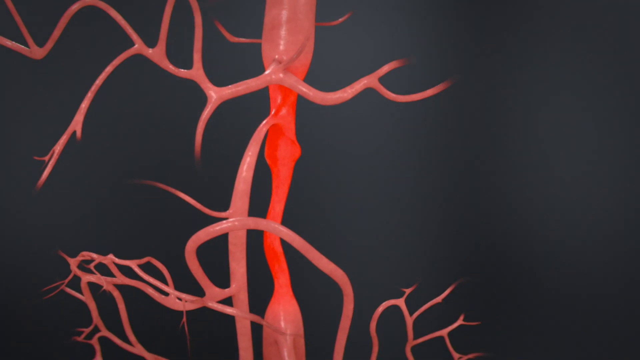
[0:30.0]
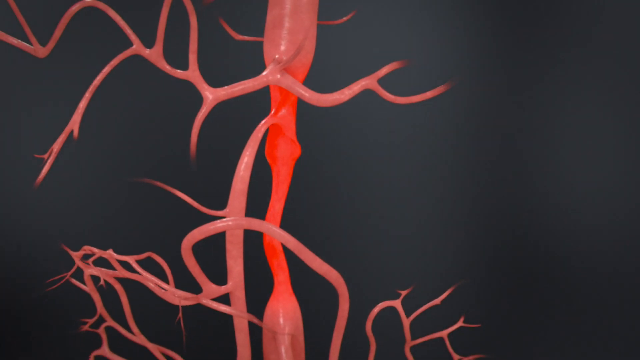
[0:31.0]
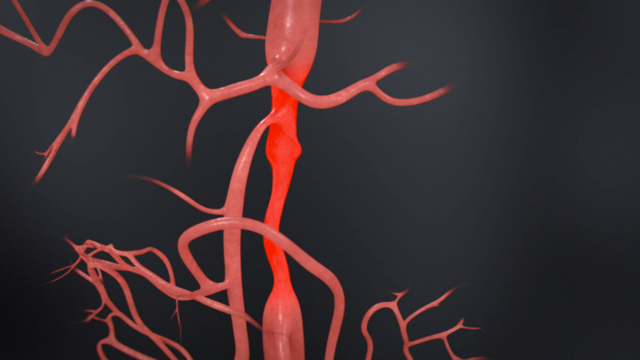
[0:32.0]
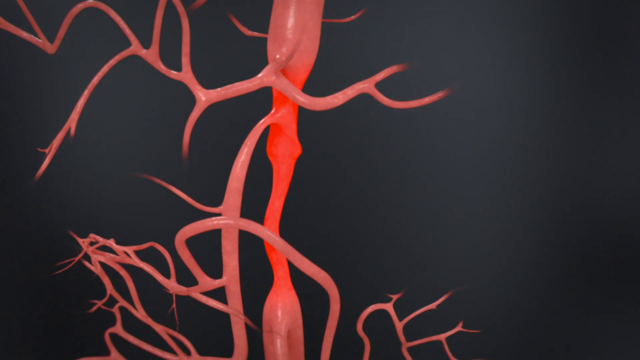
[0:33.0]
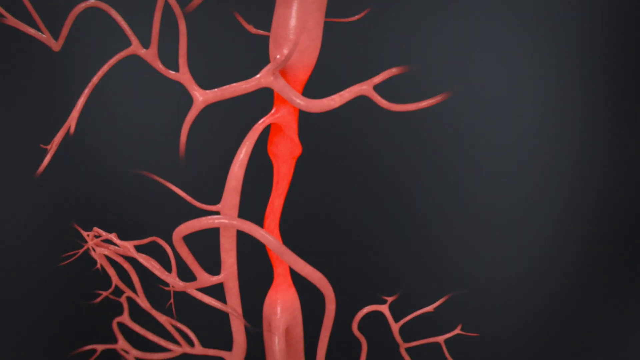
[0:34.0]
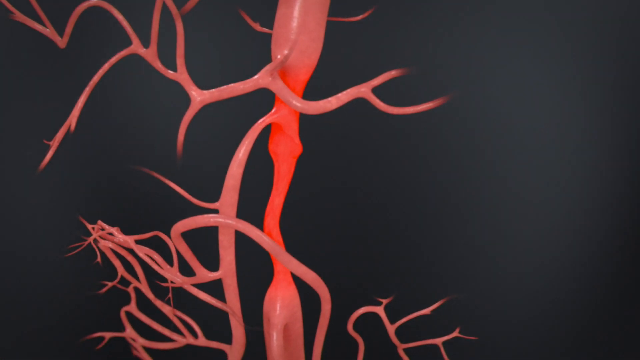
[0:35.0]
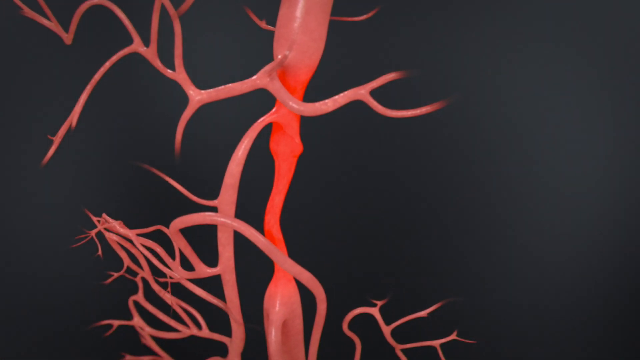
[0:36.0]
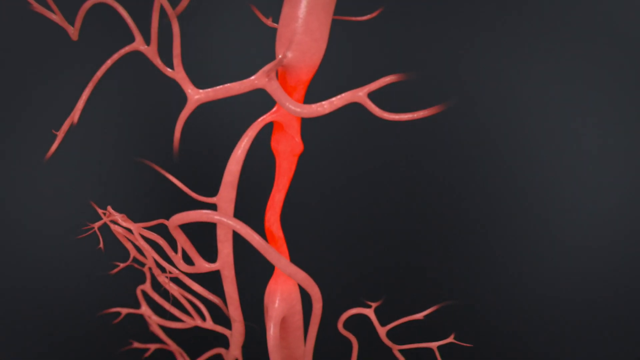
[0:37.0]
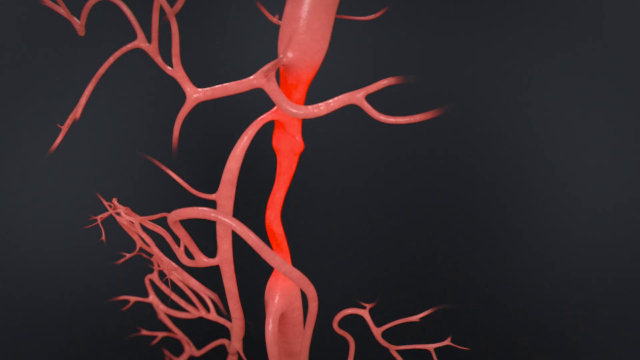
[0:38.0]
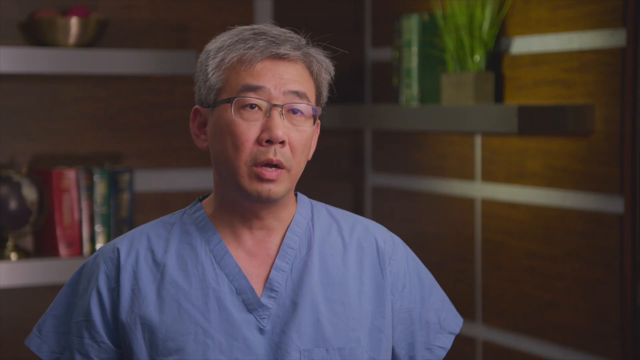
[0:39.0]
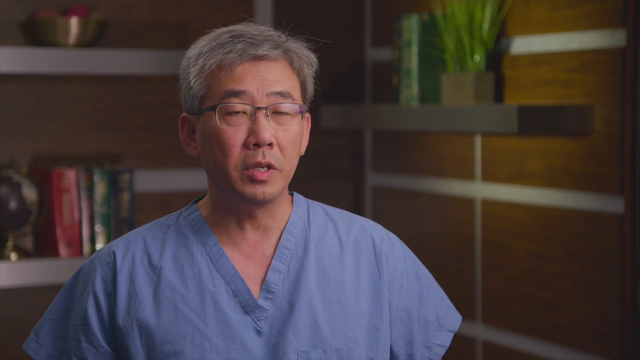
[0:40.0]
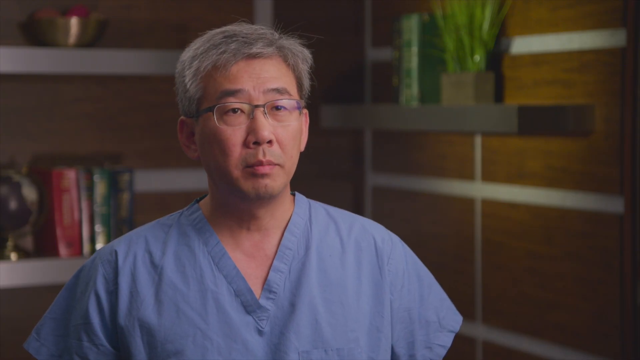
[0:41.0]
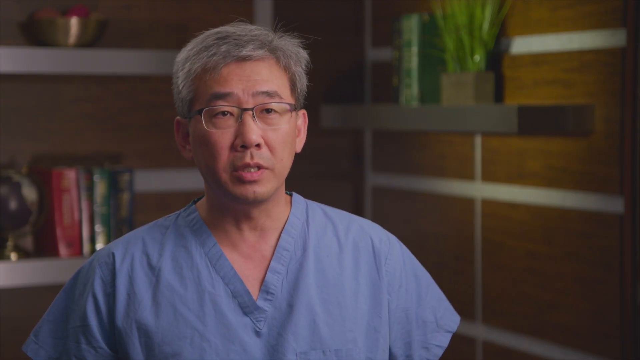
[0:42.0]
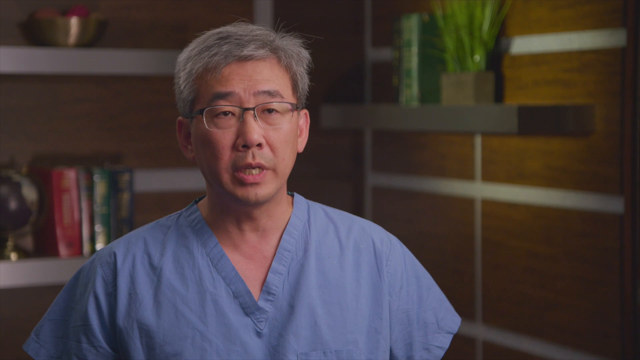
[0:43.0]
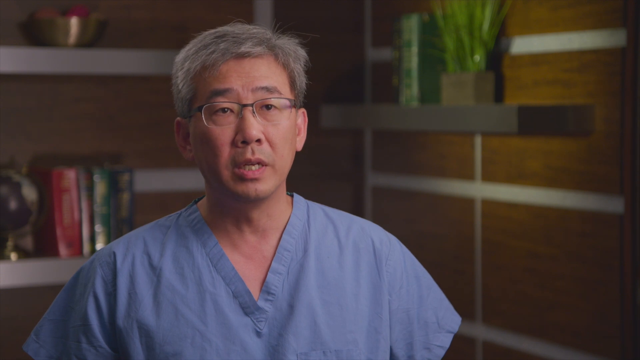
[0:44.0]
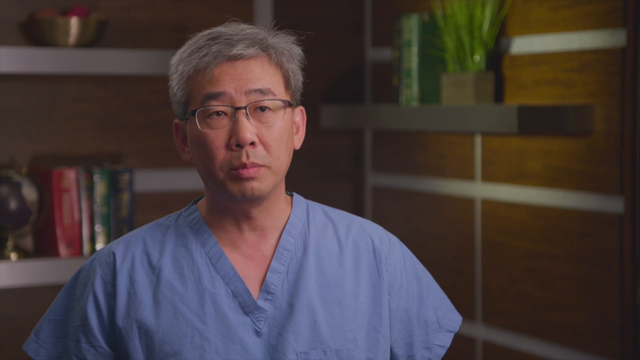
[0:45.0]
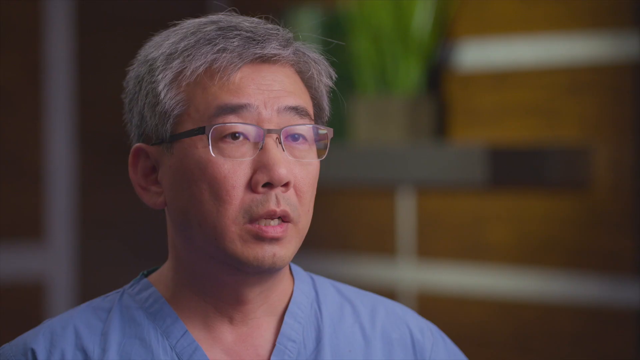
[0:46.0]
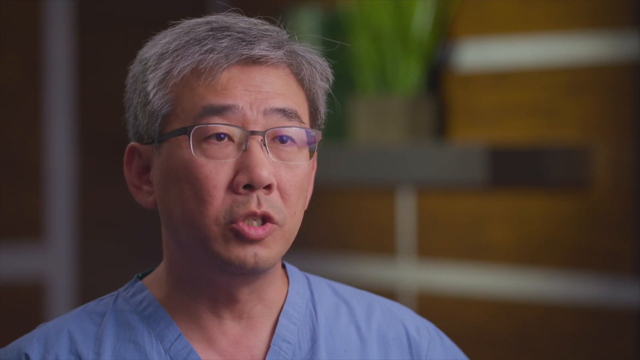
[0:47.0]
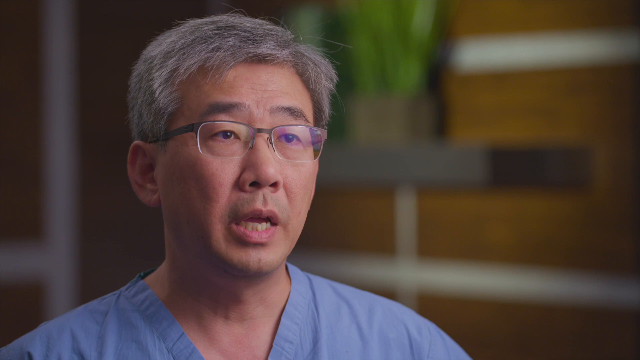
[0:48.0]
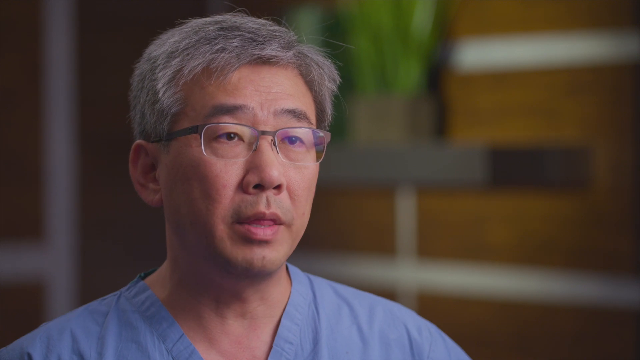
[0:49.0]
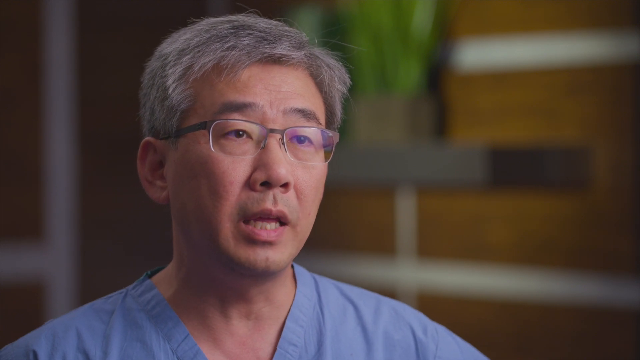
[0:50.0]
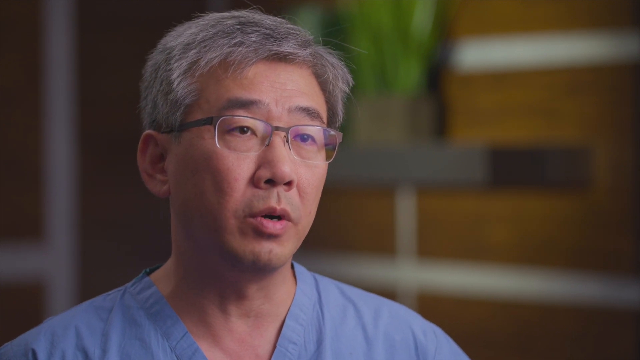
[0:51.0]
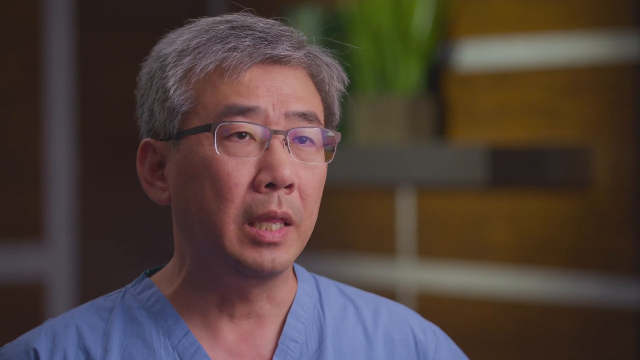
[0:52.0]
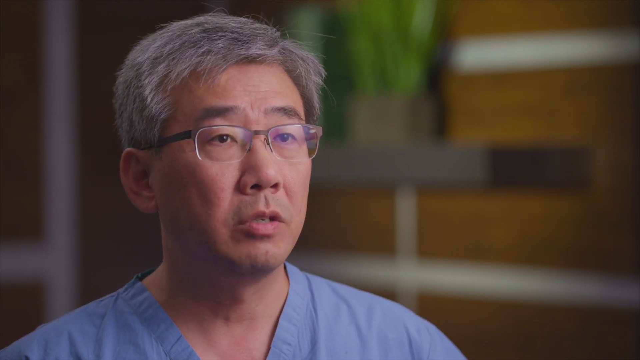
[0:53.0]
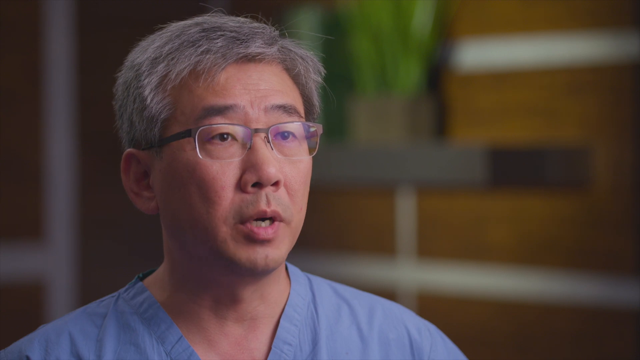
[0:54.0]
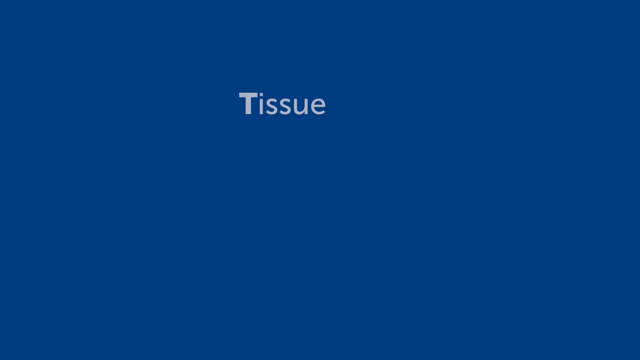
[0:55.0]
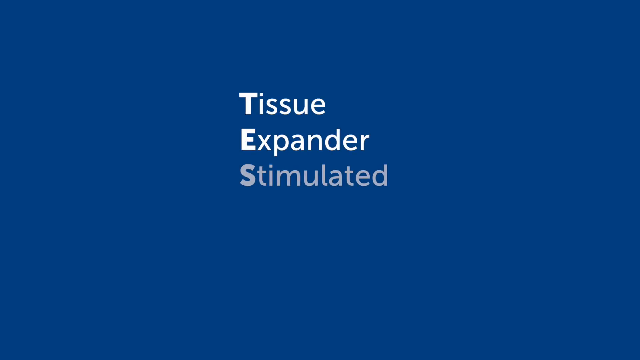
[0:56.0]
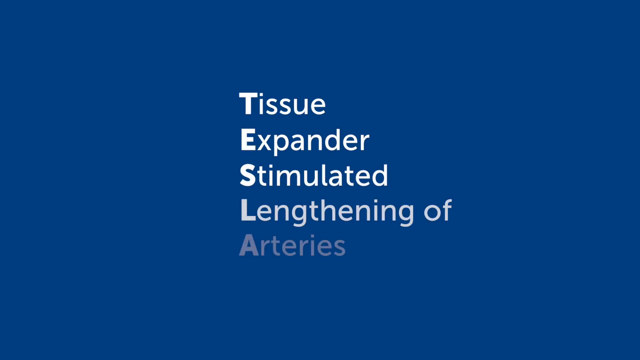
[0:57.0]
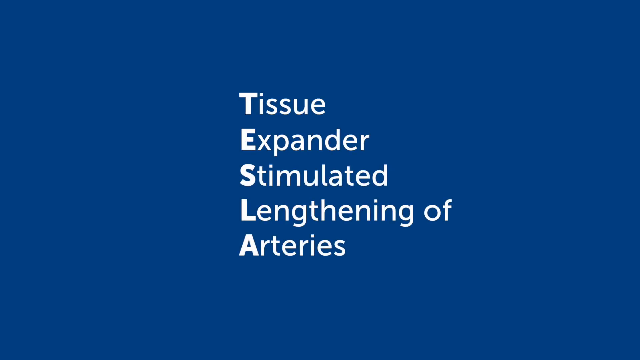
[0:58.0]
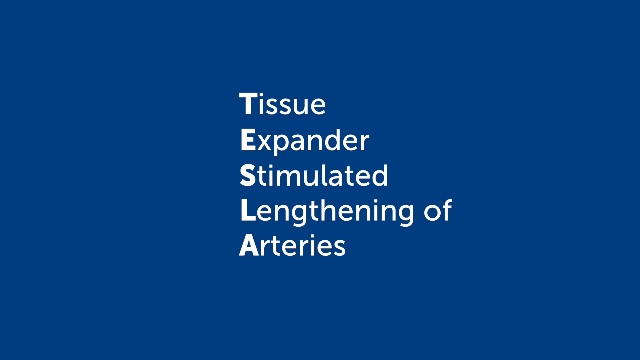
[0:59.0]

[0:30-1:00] A close-up shows a diagram of the vein system, or complex aortic system, oriented vertically and centered on a black background. The scene returns to the doctor sitting in a room with wood paneling. He looks directly at the interviewer while the camera is angled slightly toward the left, and as he continues speaking he moves his head slightly to the left. The shot then moves to a close-up of his head, with the camera still positioned toward the left. The screen fades to a blue background with the word "TESLA" running vertically down the center. For each letter of "TESLA", a word is formed horizontally: "TISSUE", then "EXPANDER", then "SIMULATED", then "LENGTHENING OF", and on the bottom row, from the A, "ARTERIES".